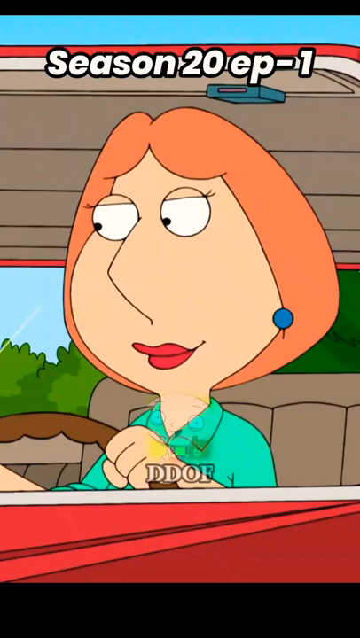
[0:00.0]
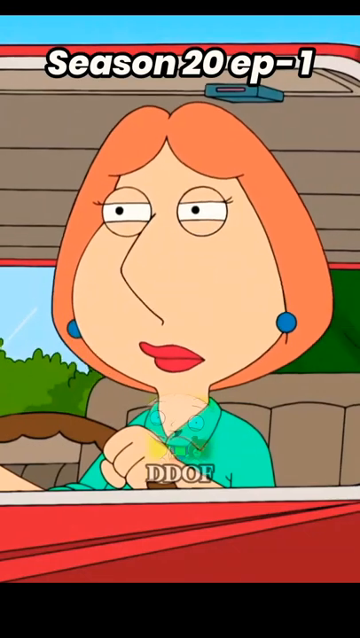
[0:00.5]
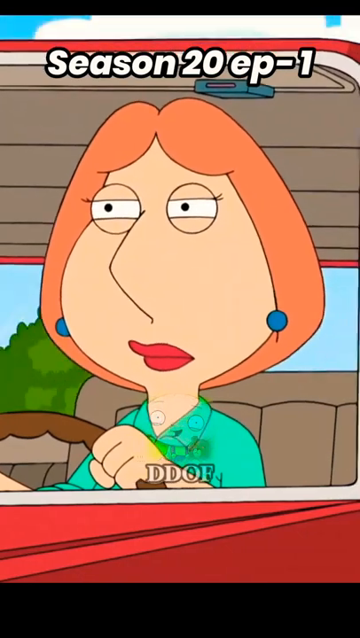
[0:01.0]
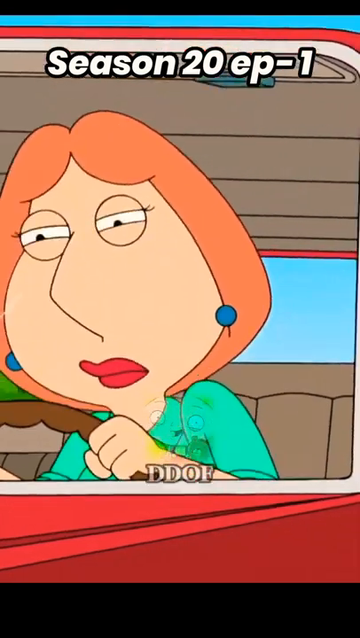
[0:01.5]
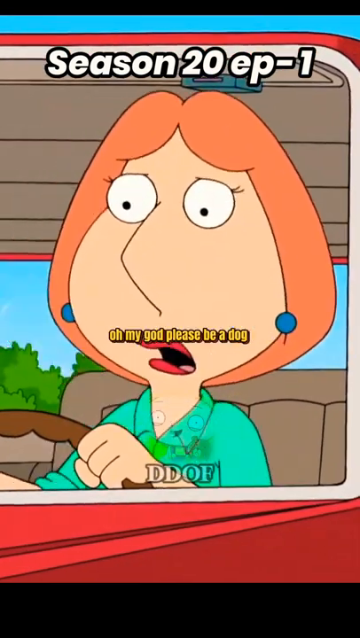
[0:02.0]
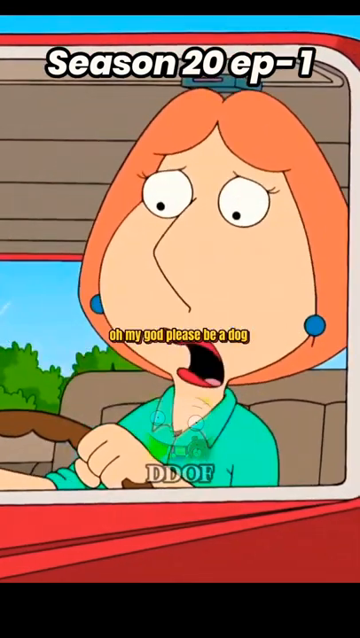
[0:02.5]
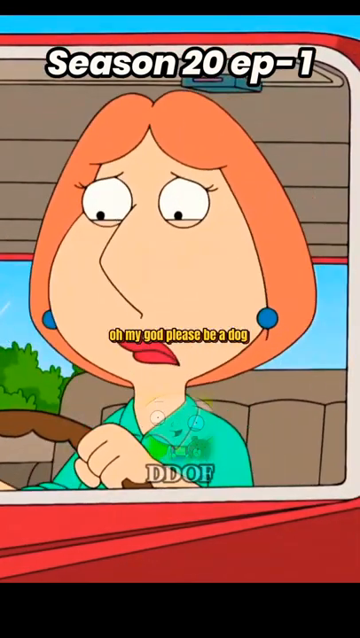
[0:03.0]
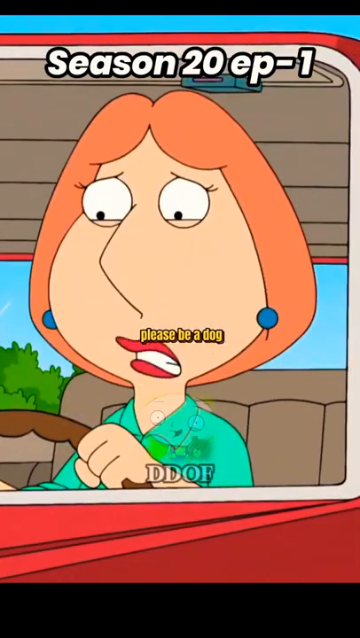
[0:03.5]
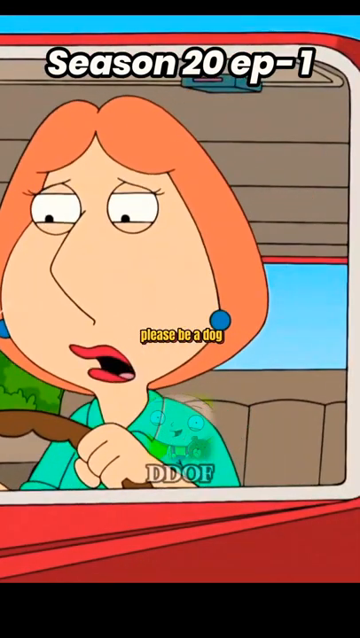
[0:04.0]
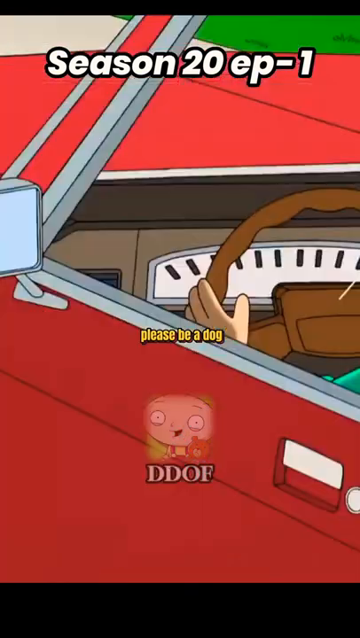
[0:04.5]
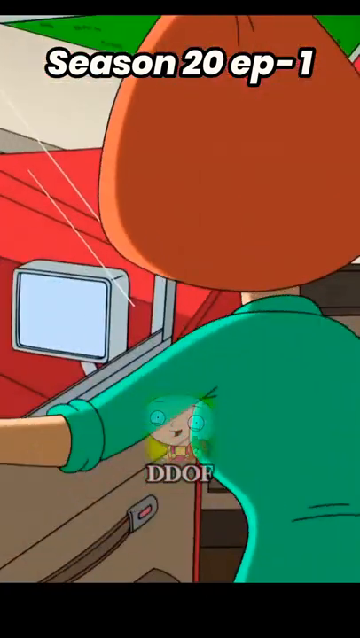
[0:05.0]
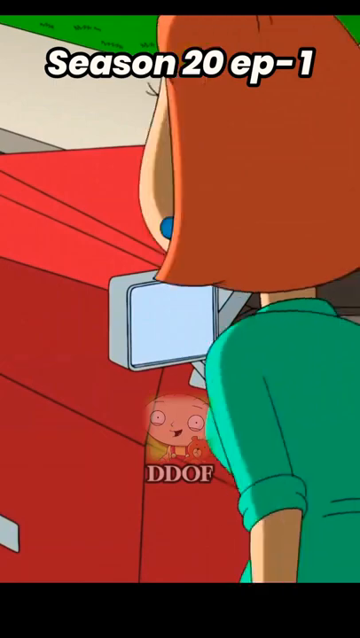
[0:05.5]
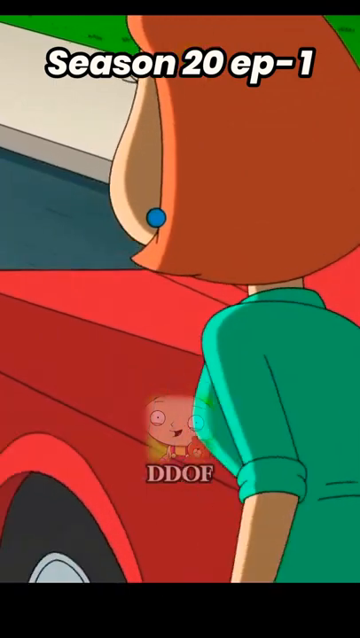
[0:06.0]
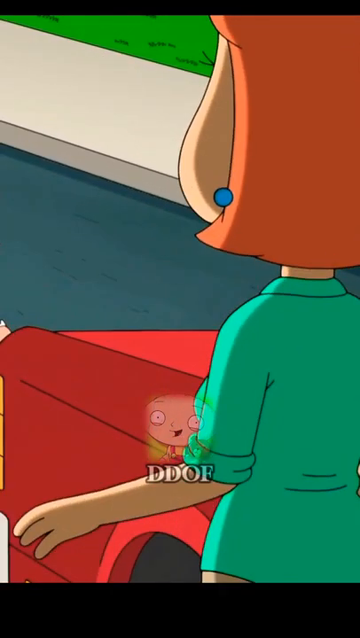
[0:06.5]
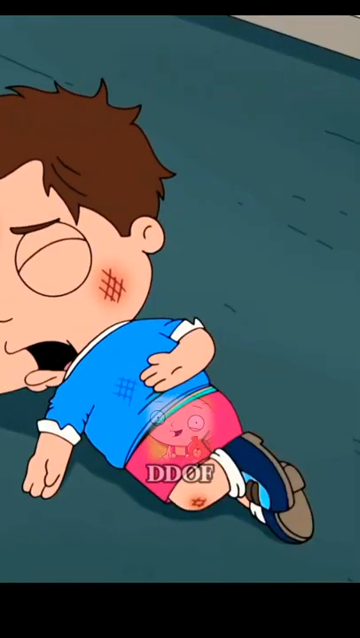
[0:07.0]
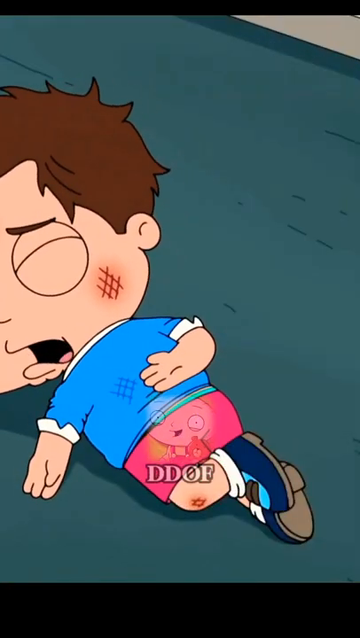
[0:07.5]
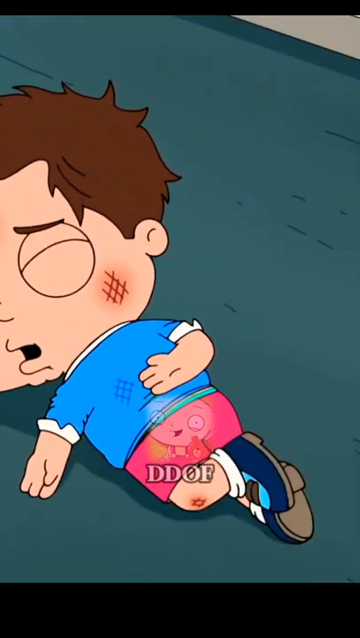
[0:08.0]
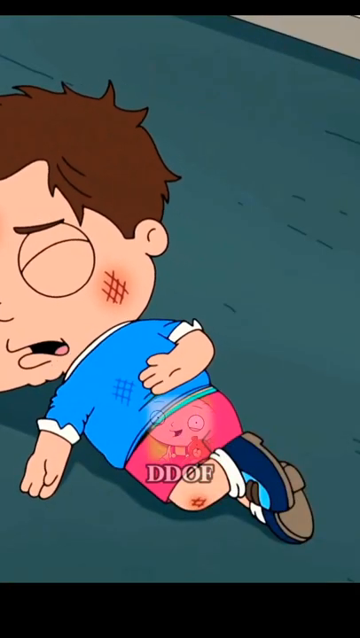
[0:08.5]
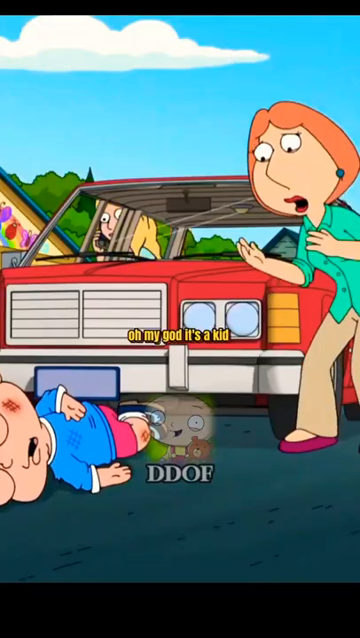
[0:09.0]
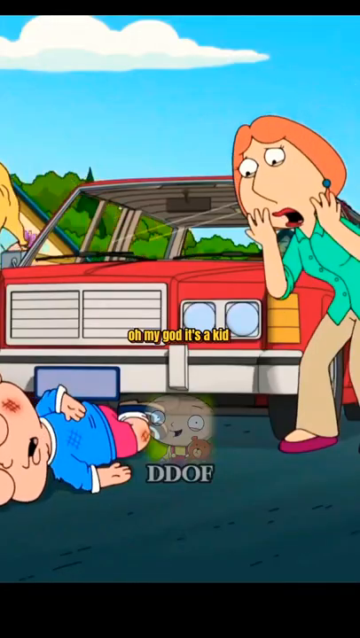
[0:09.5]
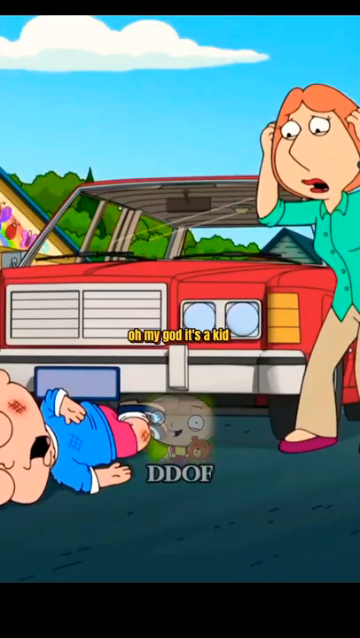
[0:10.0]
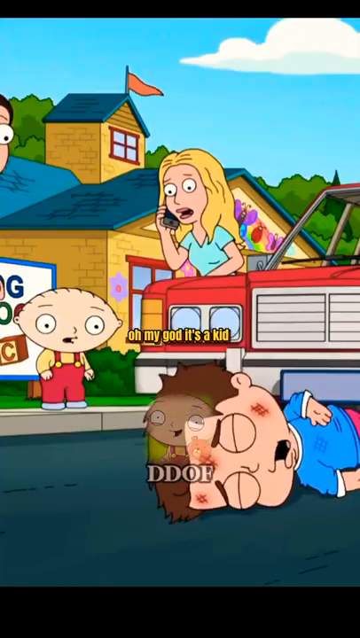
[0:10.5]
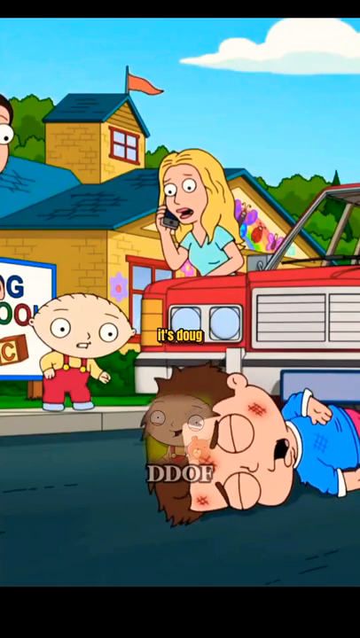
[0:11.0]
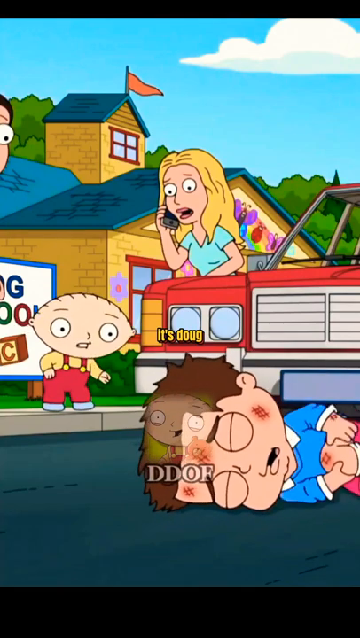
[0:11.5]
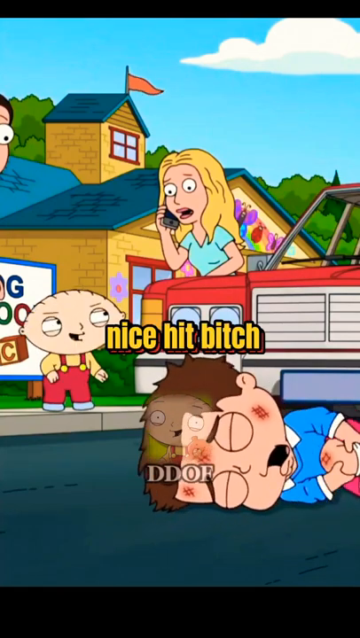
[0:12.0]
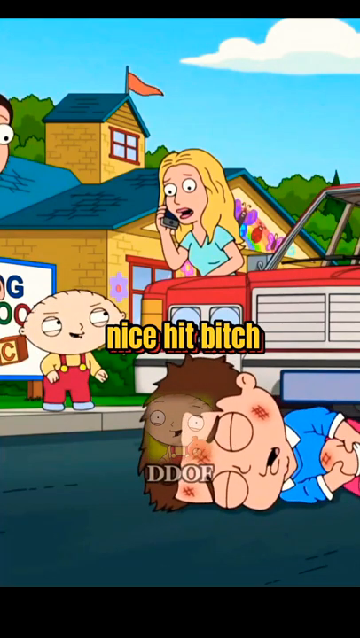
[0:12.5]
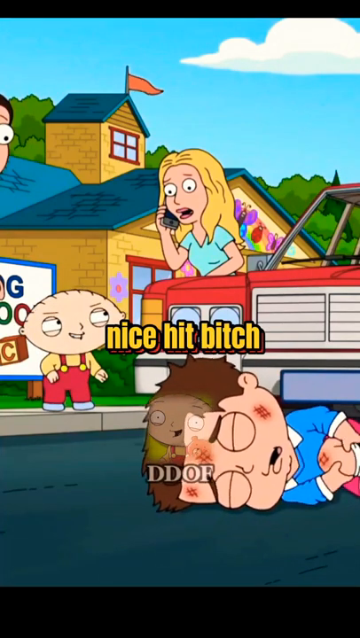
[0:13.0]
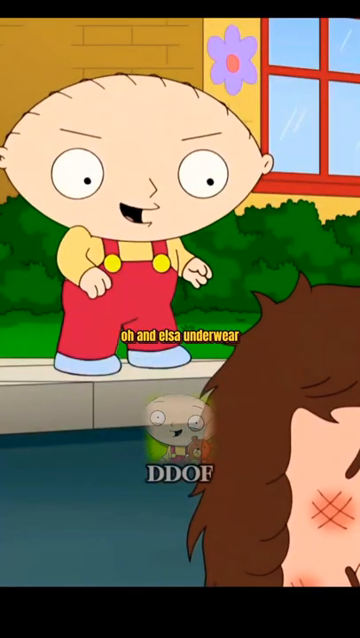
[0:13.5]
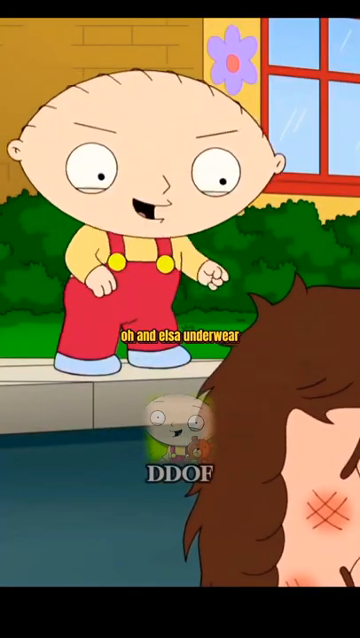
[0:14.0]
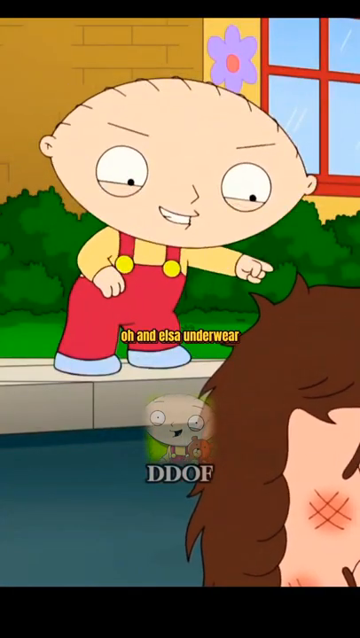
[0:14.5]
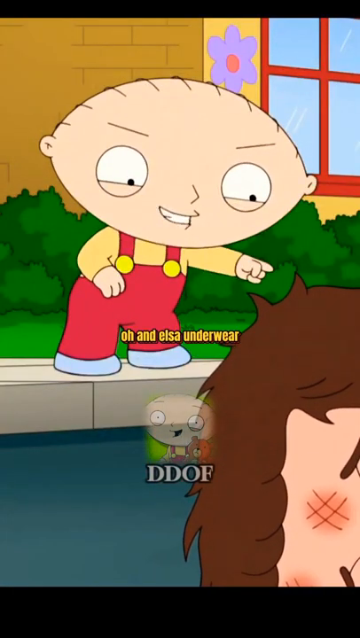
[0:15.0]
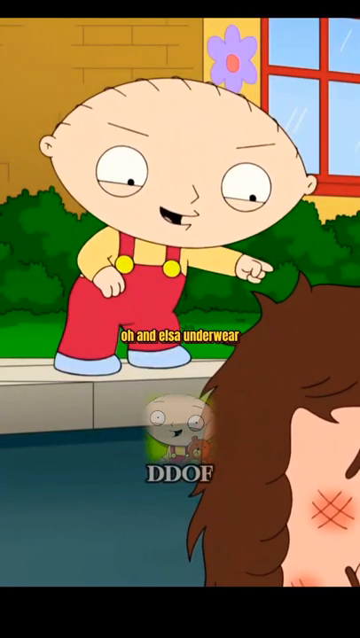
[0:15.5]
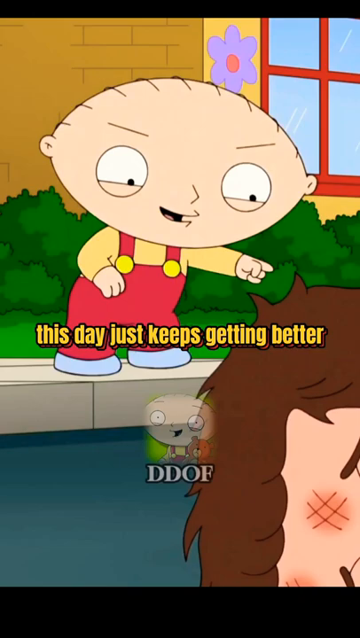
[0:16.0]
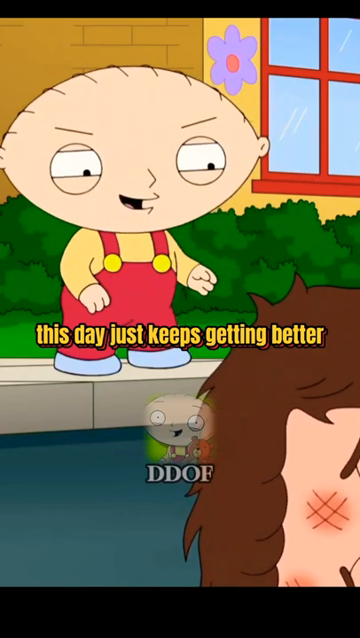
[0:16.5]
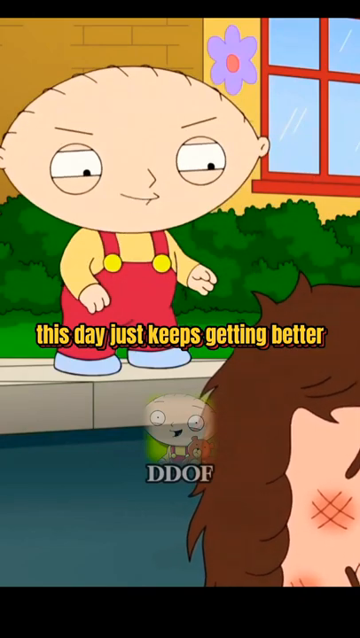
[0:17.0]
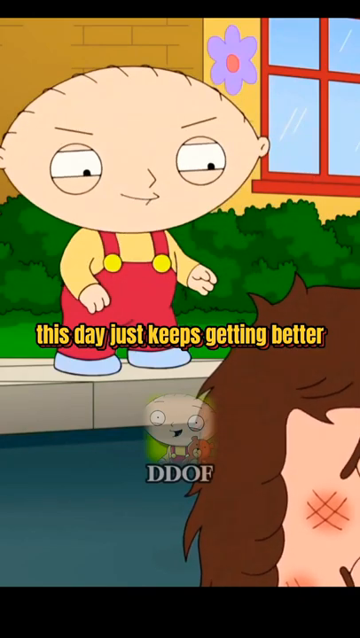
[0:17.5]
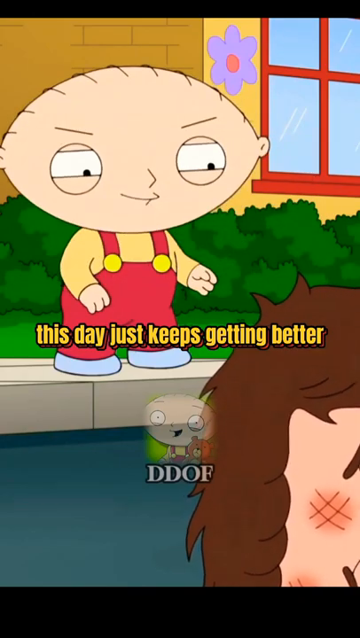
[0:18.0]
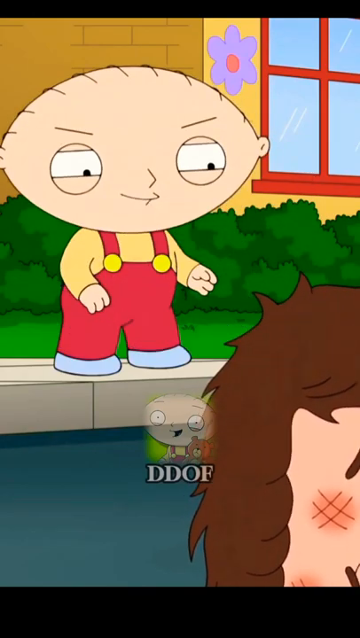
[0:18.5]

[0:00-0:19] An animated cartoon shows what appears to be a mother driving through a suburban neighborhood. She hits something, which turns out to be a toddler. He is on the ground and looks badly hurt, as if the left side of his body is broken, though it is hard to tell because he is grabbing his kneecap, so he may not be as injured as he first seemed. This happens in front of a preschool. The toddler wears a blue shirt and pink shorts and has brown hair. To the left, on the sidewalk, is another toddler with a football-style head and not much hair; he wears overalls and is pointing, saying that the kid deserves it. A blonde woman on the phone is on the side of this balding toddler, possibly calling the police. The balding toddler seems to have a lot of animosity toward the hurt child, and based on the text, he appears to find amusement in what happened.